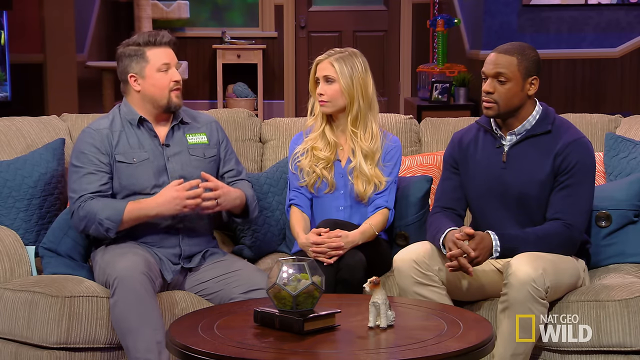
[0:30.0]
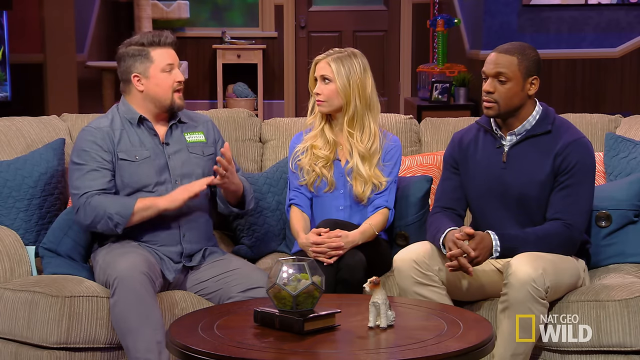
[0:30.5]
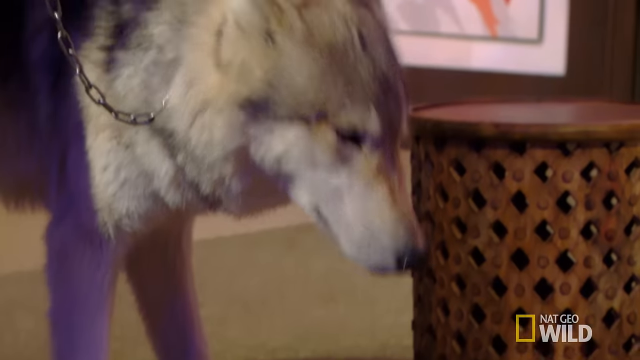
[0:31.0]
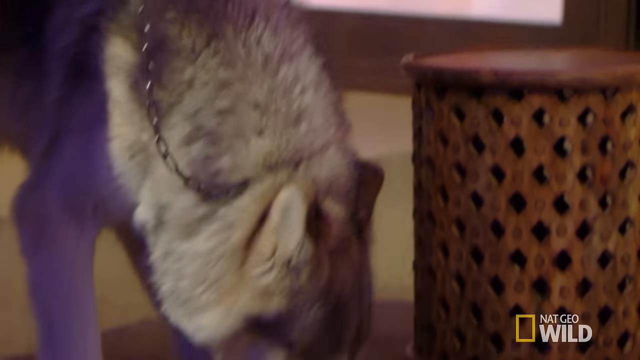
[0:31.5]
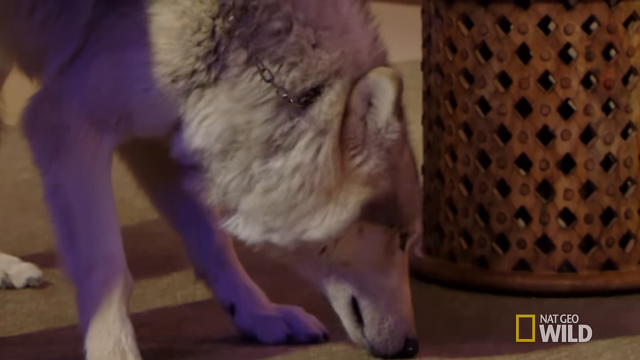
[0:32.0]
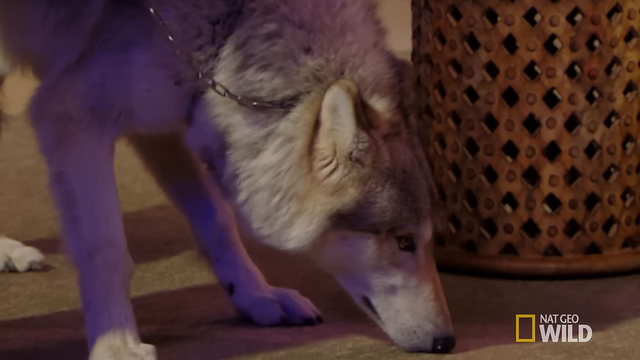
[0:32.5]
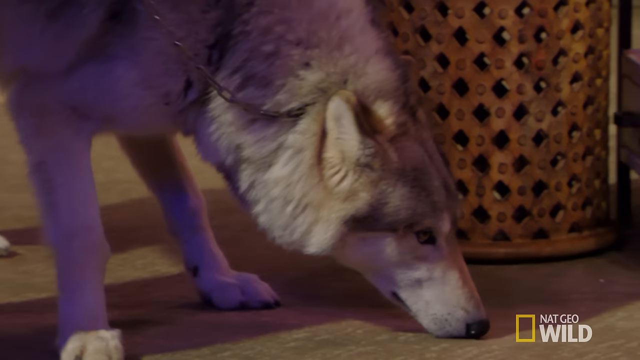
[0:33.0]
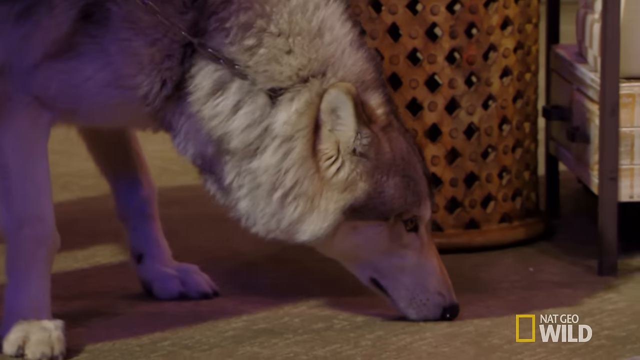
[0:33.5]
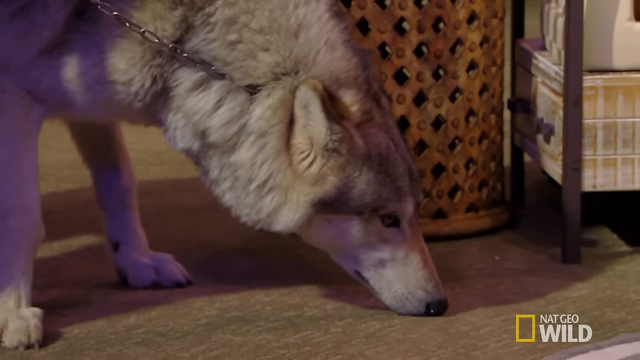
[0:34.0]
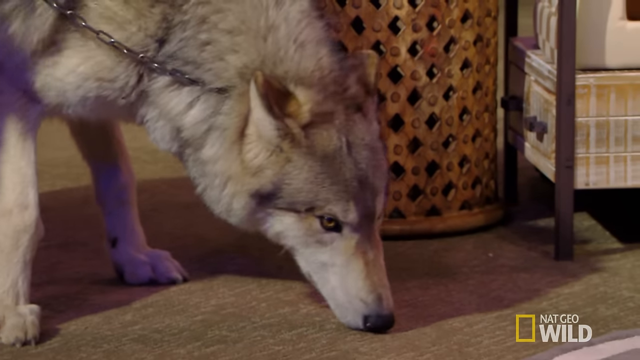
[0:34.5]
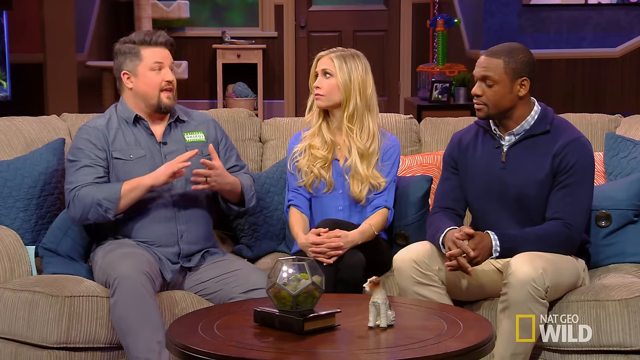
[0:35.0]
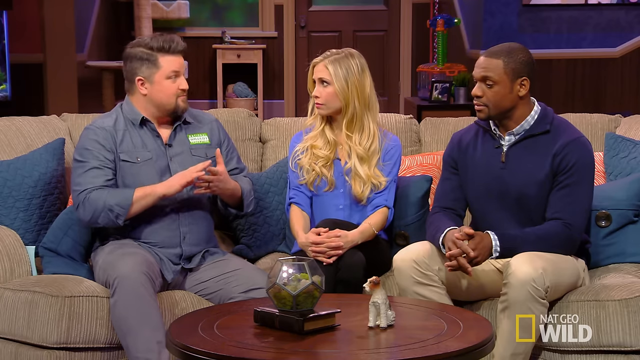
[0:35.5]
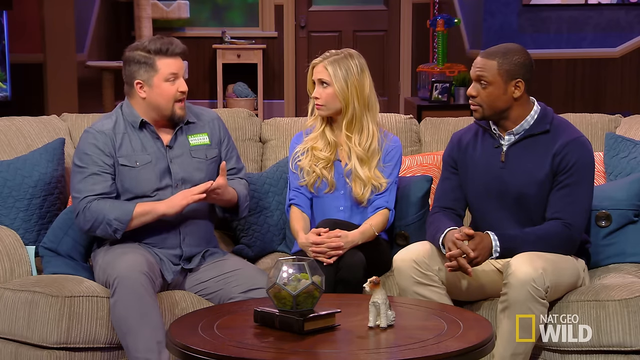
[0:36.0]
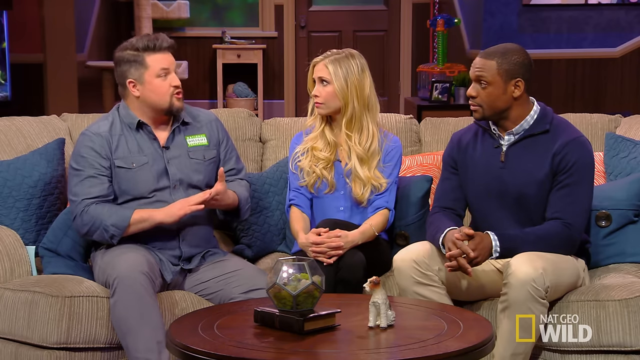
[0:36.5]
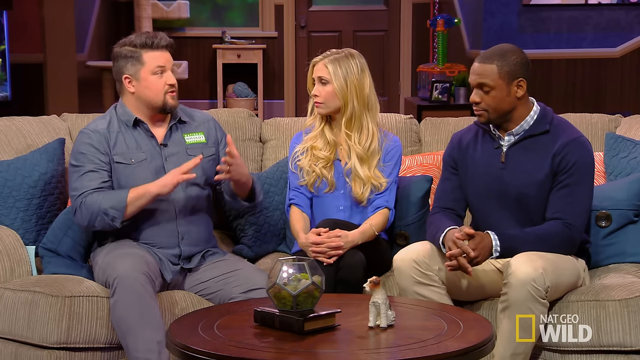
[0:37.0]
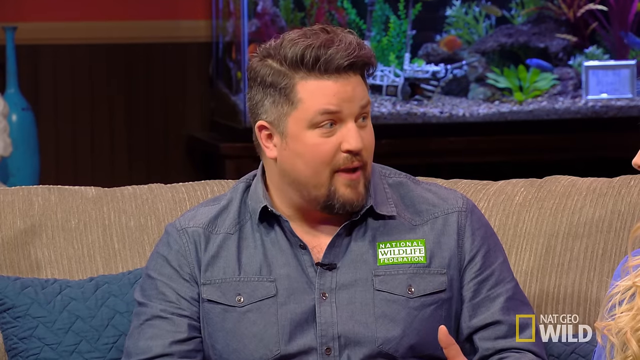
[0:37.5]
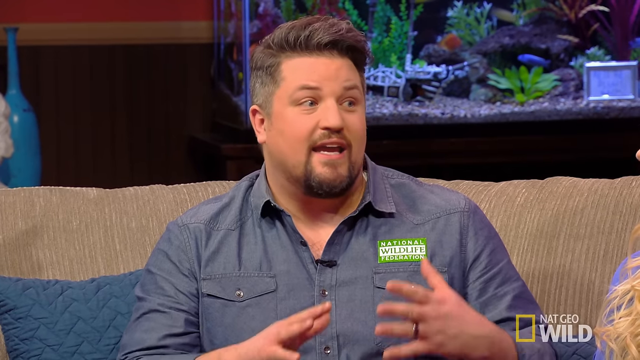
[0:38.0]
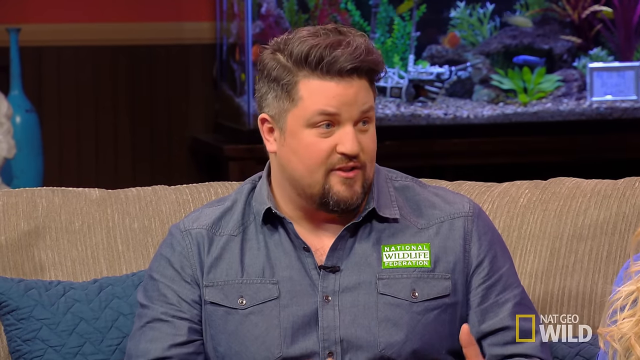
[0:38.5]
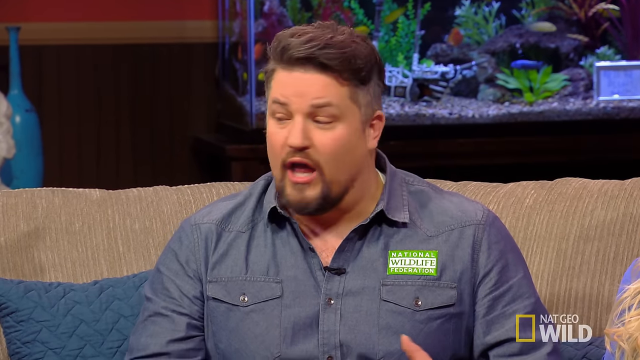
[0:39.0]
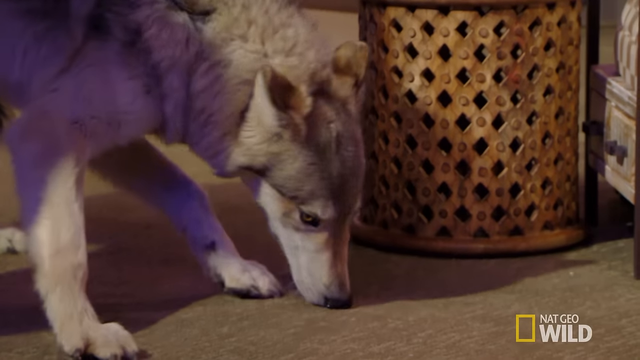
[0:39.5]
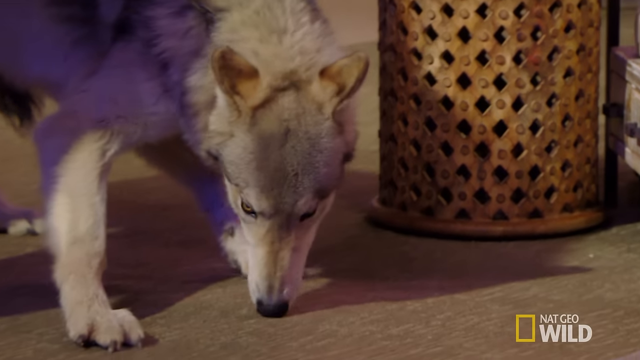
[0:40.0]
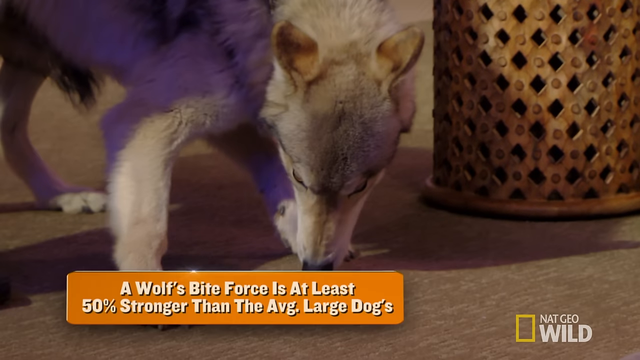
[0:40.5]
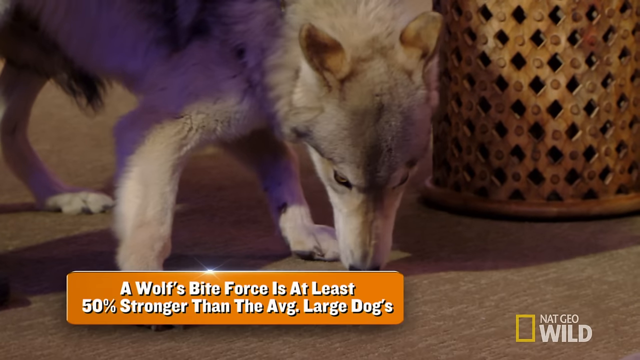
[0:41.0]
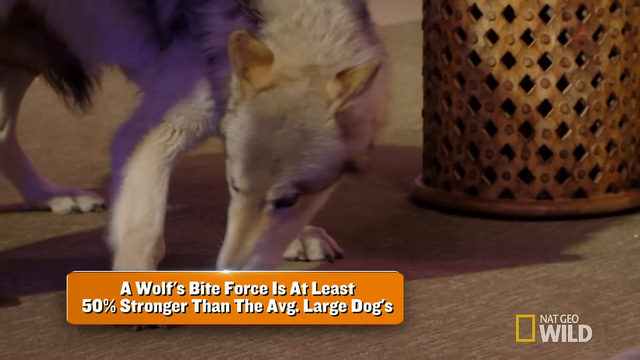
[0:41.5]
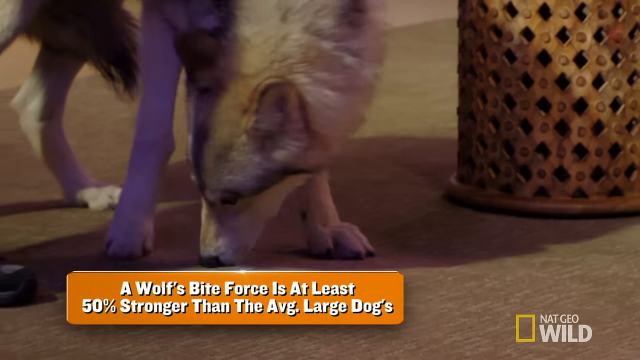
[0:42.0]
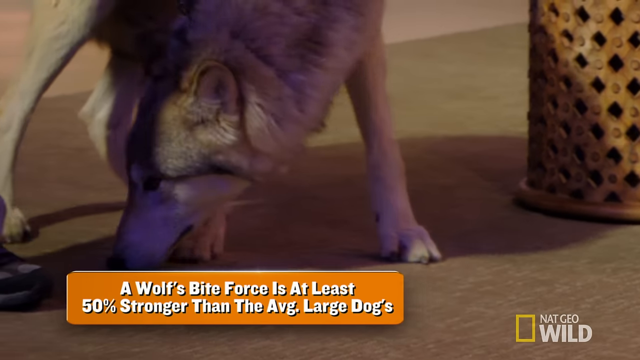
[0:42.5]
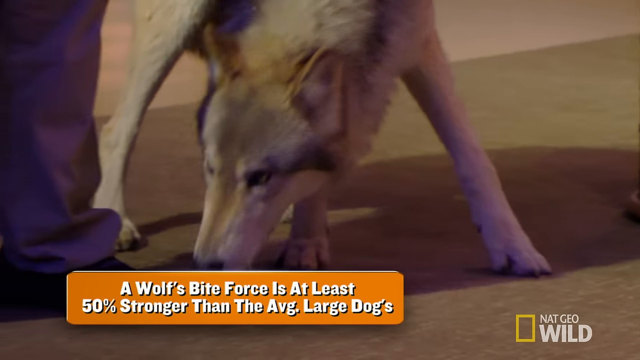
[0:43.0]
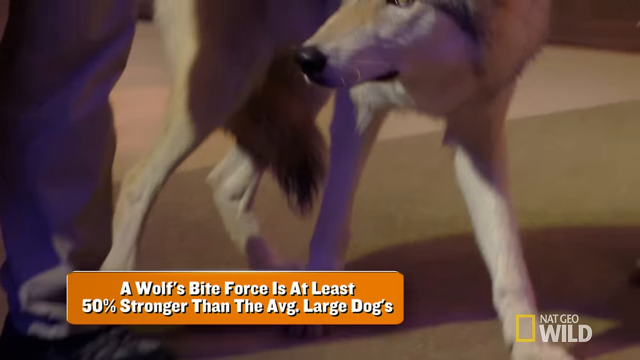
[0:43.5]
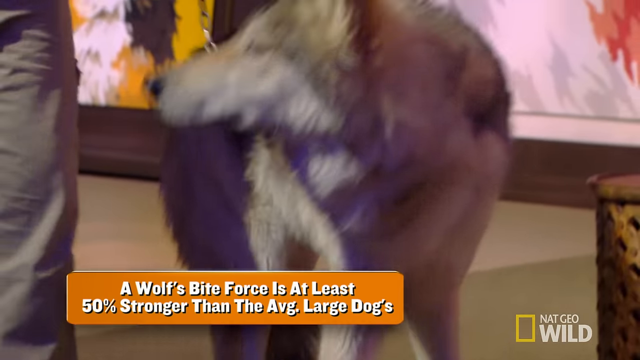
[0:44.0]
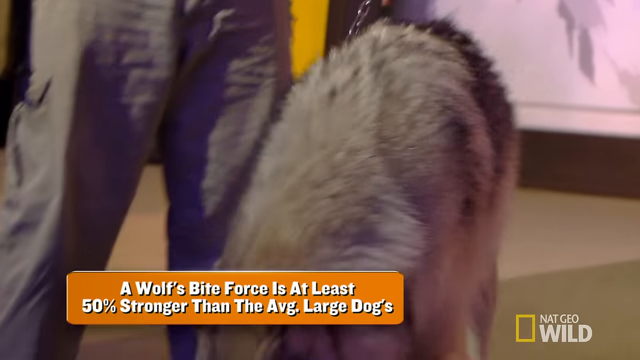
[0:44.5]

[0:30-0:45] The dog keeps sniffing around and walks around the room, and there is a basket close to where it is sniffing. The man continues talking to the white lady and the black man, demonstrating with his hands. The camera seems more zoomed in on his face, and the aquarium is still visible behind him. The black man now seems to be paying more attention, looking at the man as he talks.